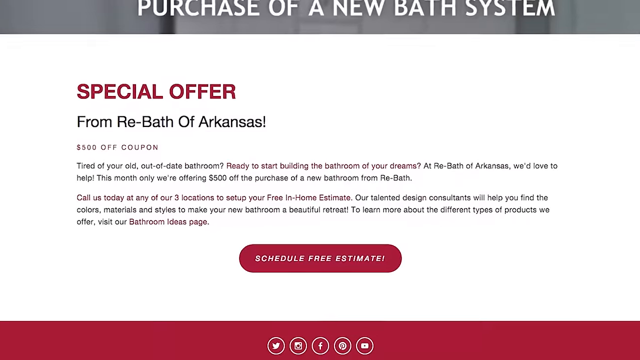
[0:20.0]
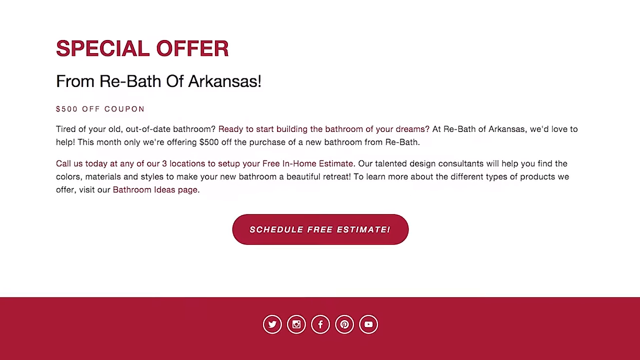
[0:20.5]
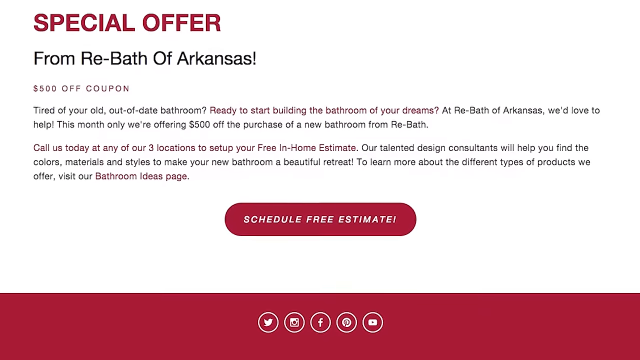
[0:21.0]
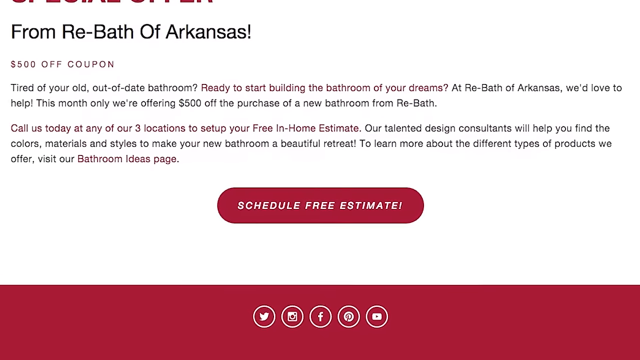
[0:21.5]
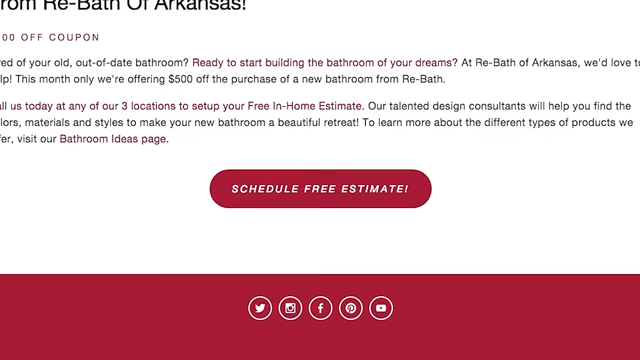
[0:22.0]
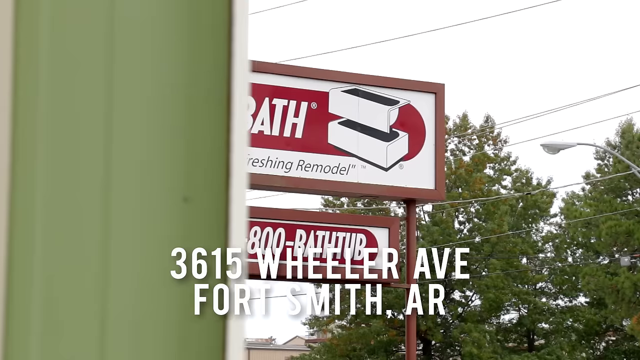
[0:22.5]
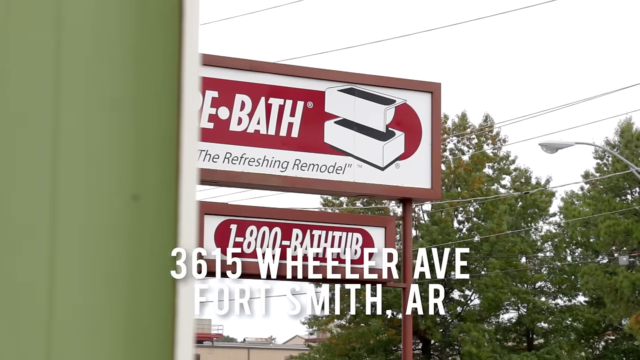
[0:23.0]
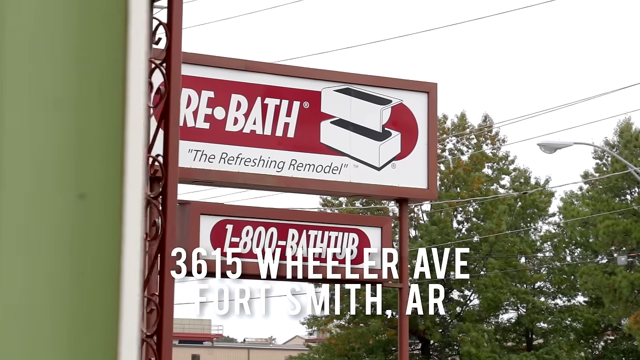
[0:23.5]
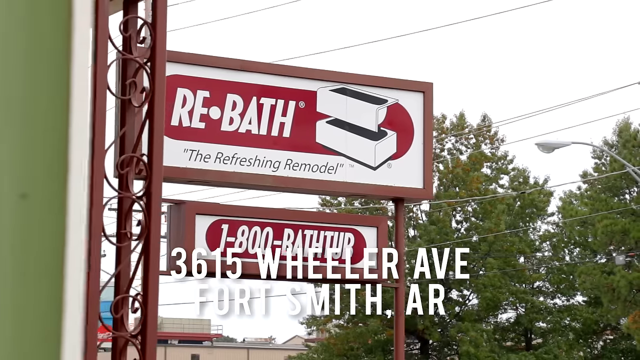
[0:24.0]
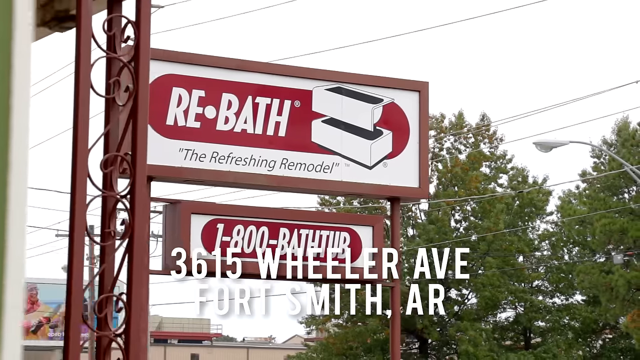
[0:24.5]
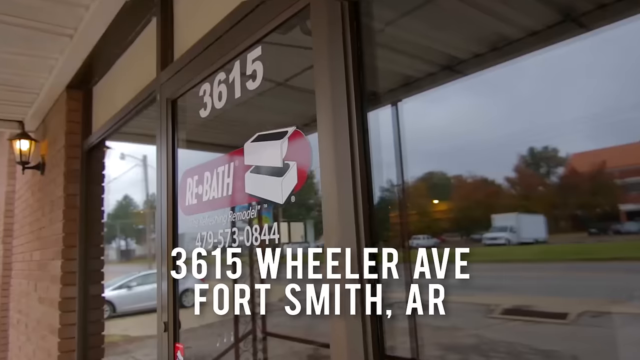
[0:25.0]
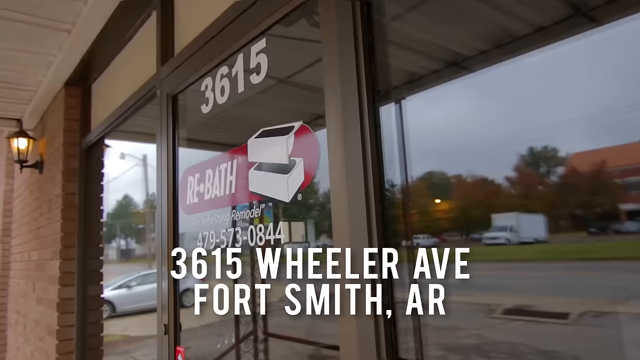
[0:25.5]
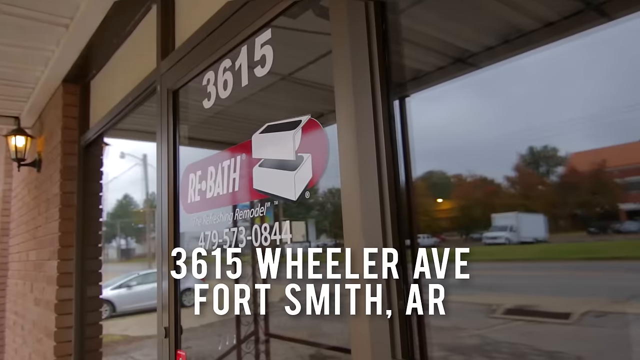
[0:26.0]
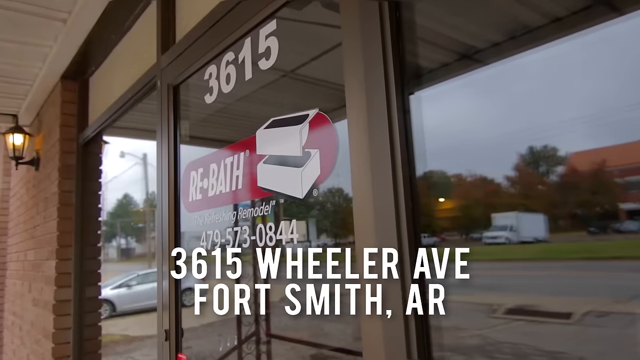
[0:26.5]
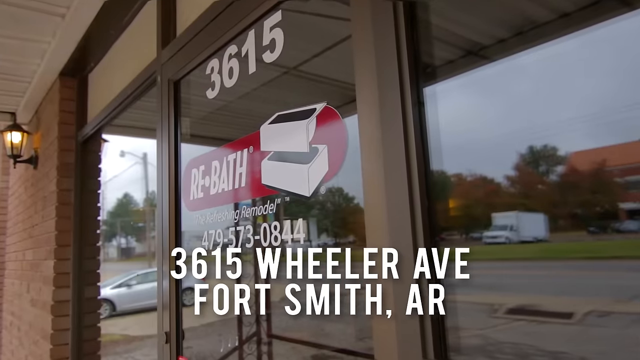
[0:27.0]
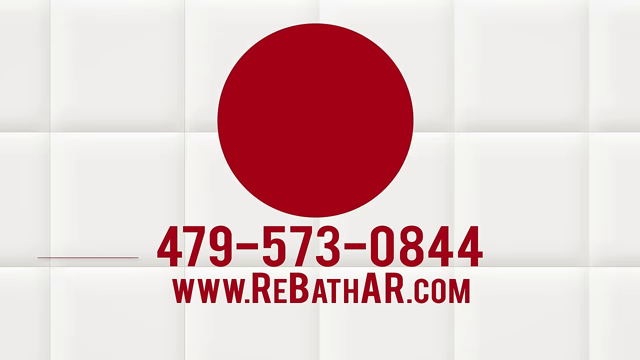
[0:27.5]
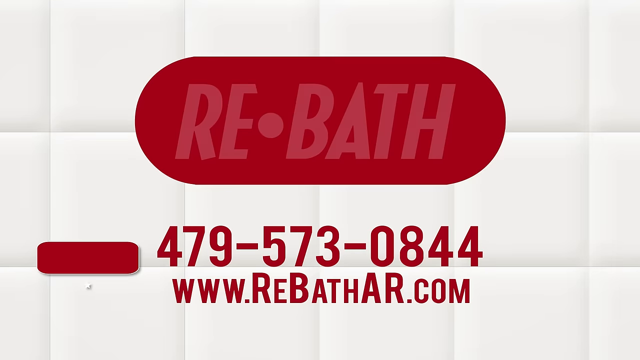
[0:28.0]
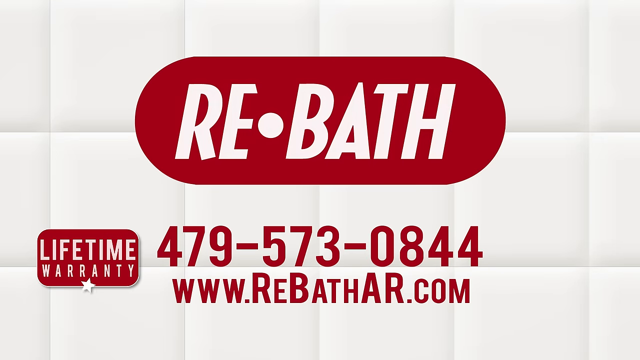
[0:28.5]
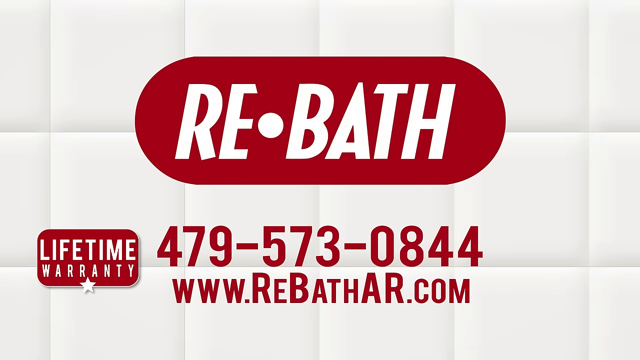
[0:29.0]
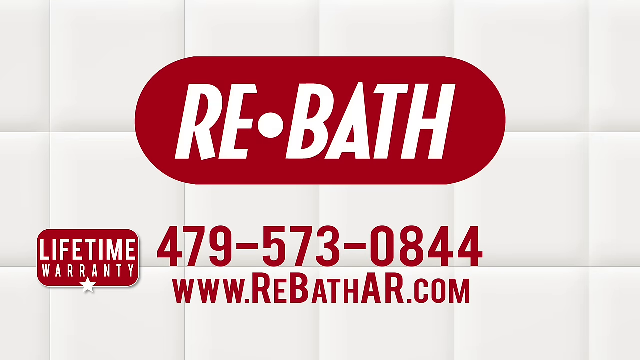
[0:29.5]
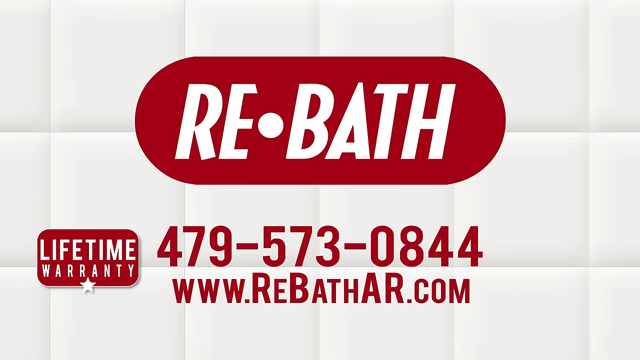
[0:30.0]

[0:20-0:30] A screen shows "purchase of a new bath system" at the top. Below it reads "special offer from Rebath of Arkansas, $500 off coupon", followed by the text: "Tired of your old out-of-date bathroom? Ready to start building the bathroom of your dreams? At Rebath Arkansas we'd love to help. This month only we're offering $500 off purchase of a new bathroom from Rebath. Call us today at any of our three locations to set up your free in-home estimate. Our talented design consultants will help you find the colors, materials, and styles to make your bathroom a beautiful retreat. To learn more about the different types of products we offer, visit our bathroom ideas page."